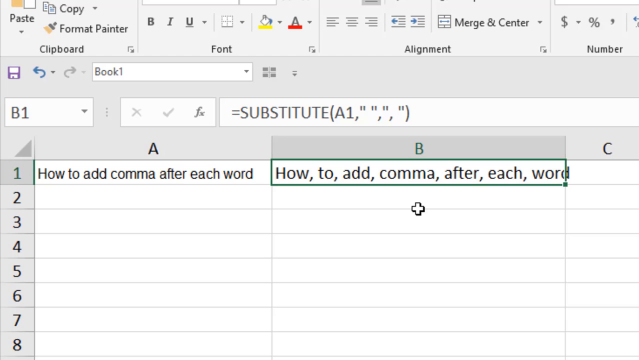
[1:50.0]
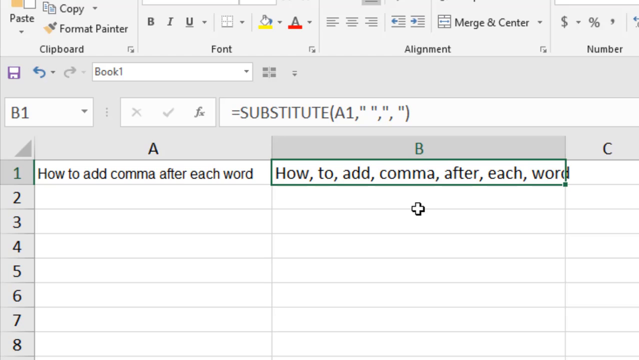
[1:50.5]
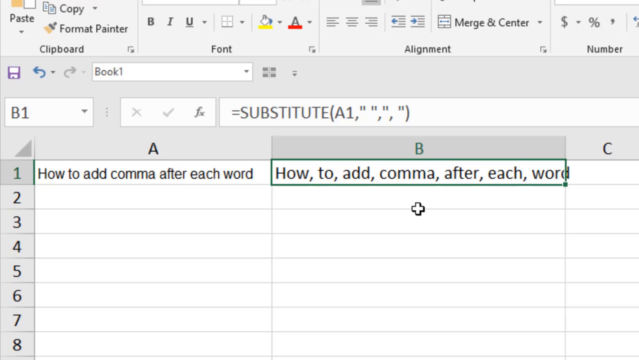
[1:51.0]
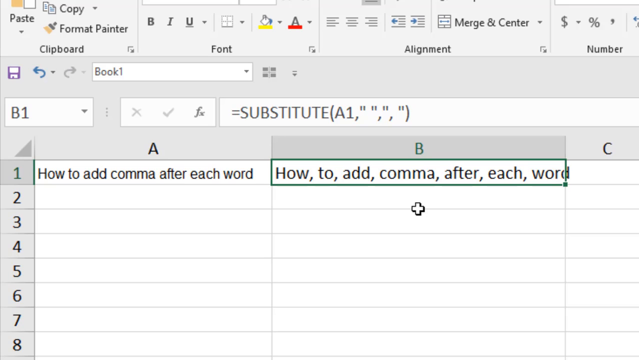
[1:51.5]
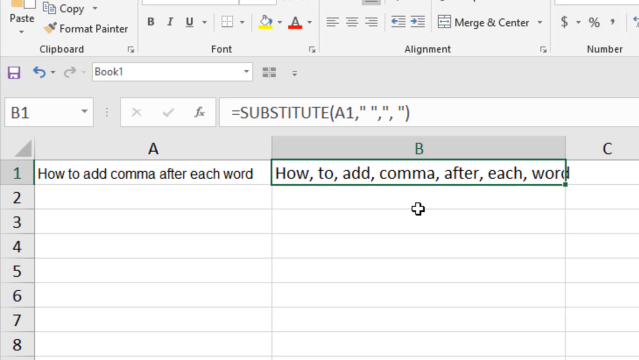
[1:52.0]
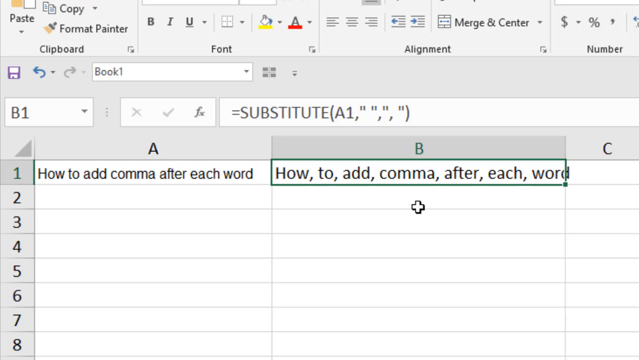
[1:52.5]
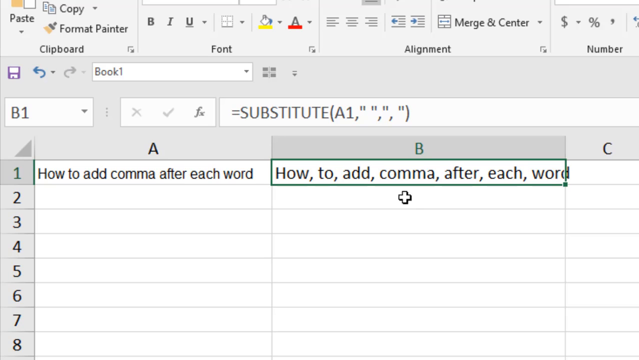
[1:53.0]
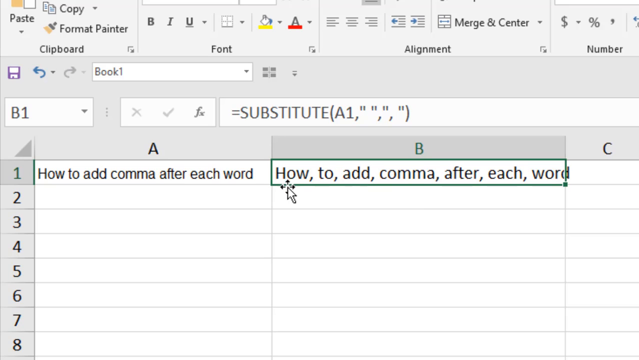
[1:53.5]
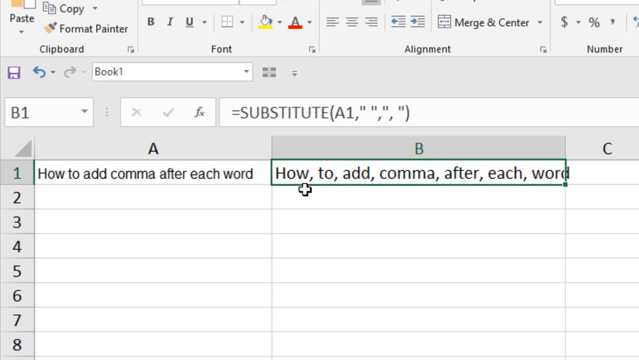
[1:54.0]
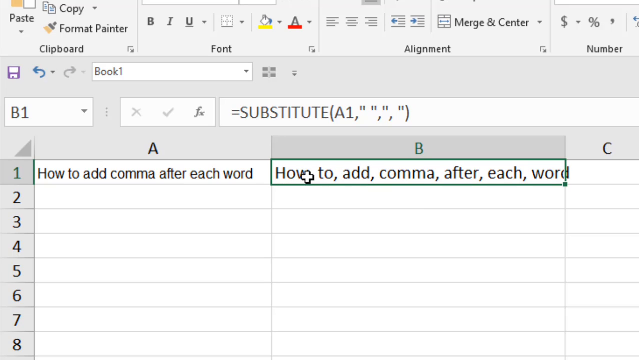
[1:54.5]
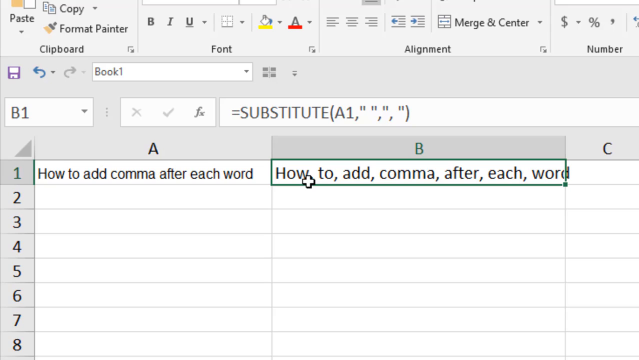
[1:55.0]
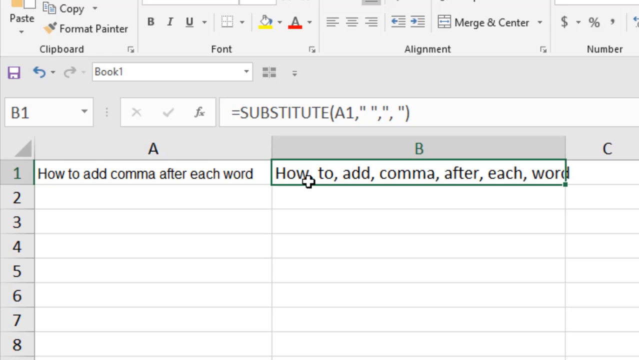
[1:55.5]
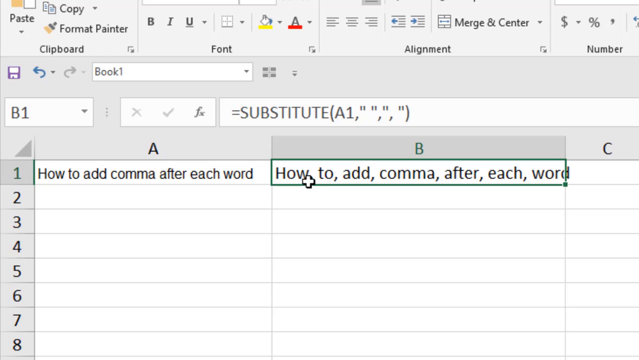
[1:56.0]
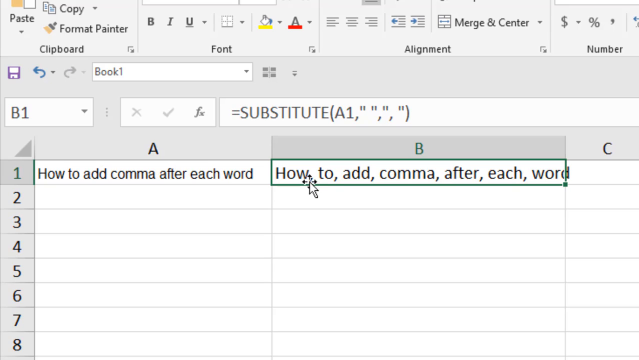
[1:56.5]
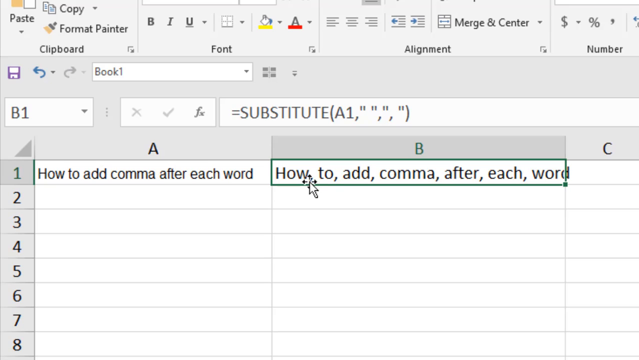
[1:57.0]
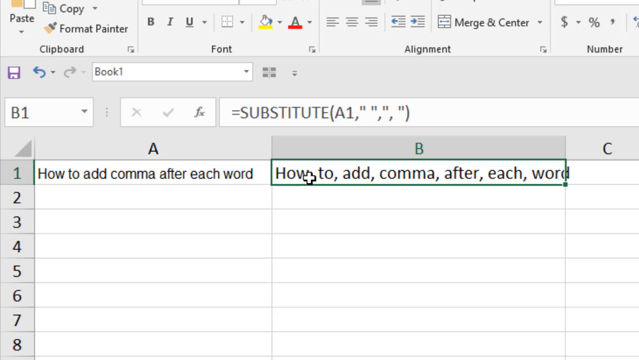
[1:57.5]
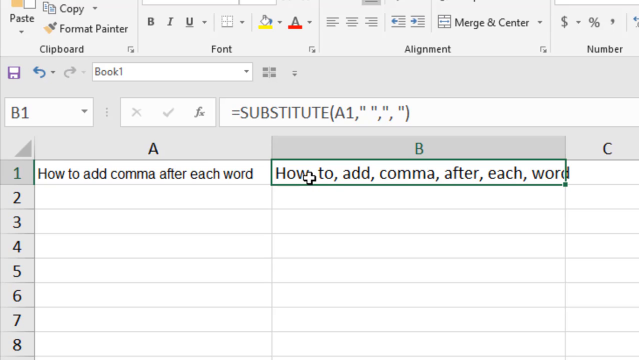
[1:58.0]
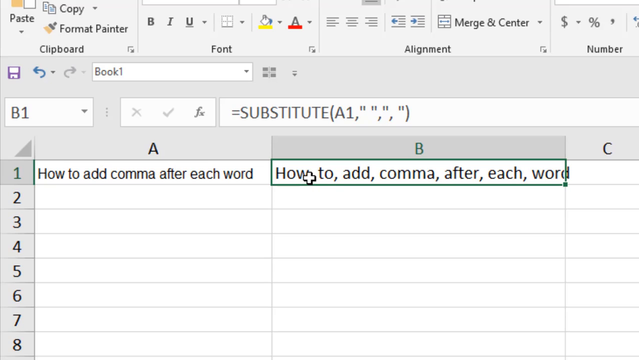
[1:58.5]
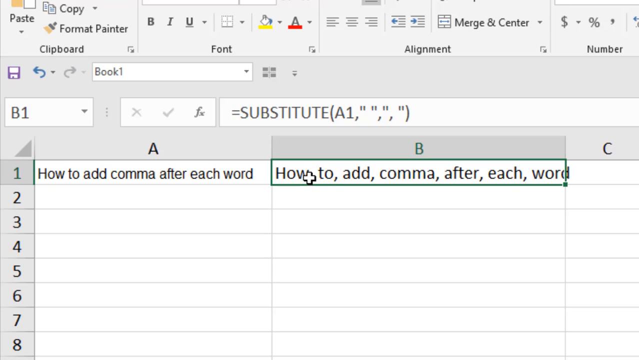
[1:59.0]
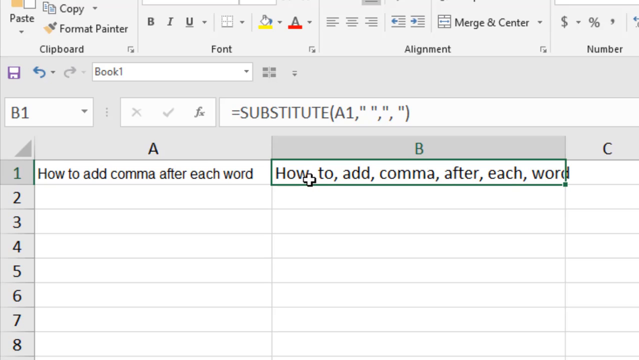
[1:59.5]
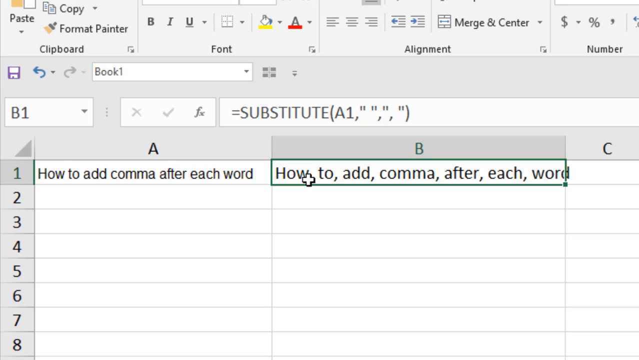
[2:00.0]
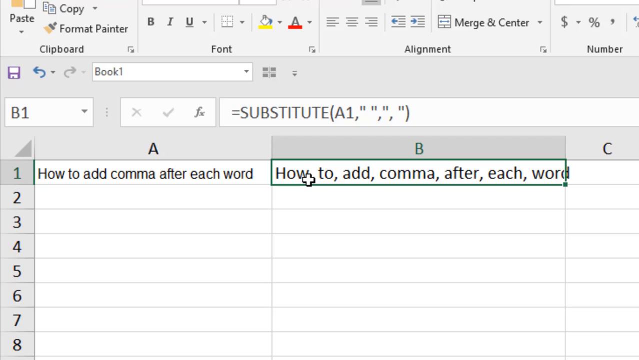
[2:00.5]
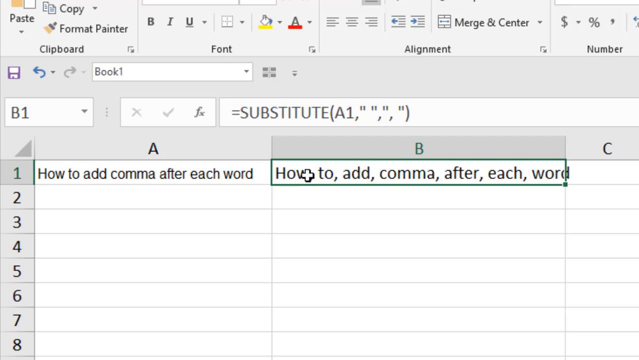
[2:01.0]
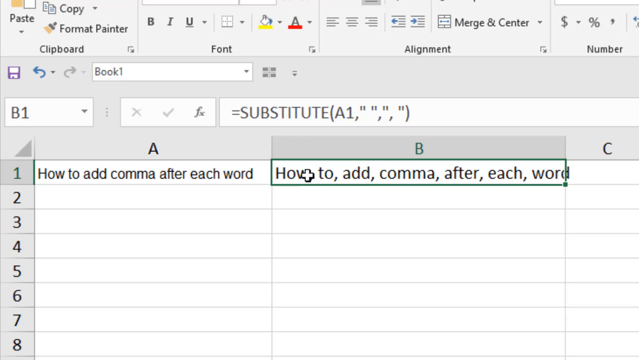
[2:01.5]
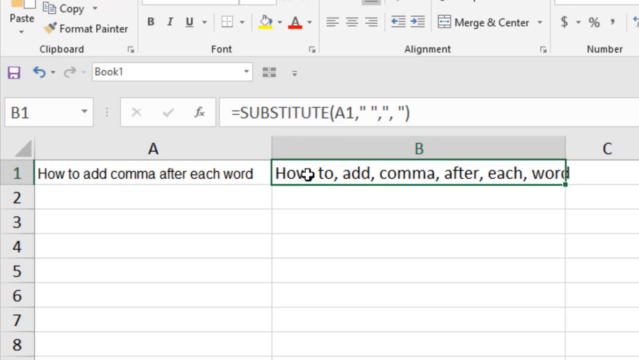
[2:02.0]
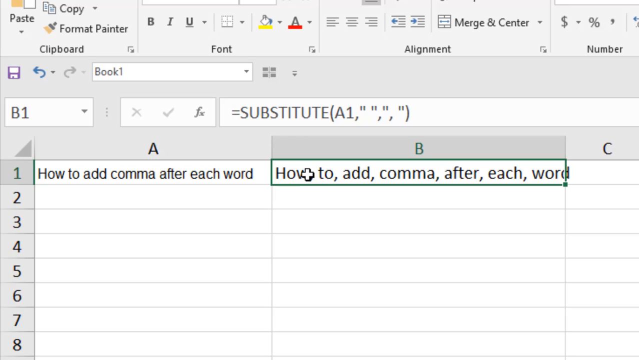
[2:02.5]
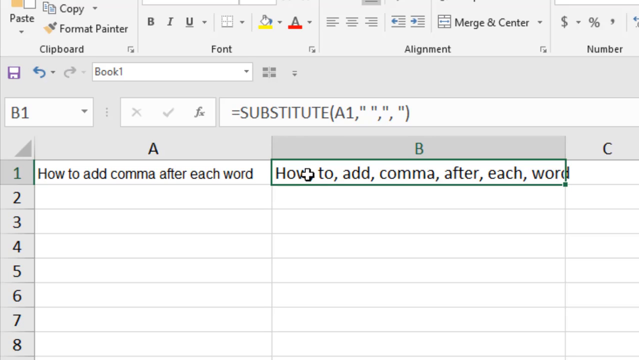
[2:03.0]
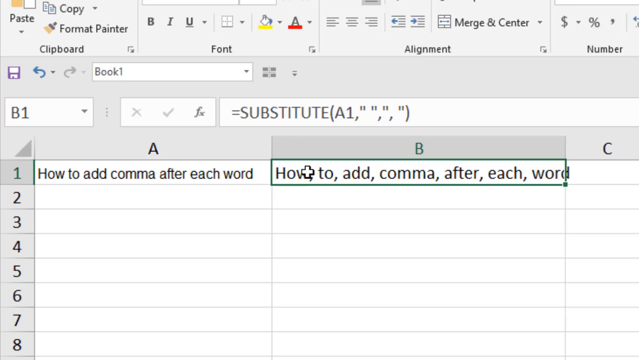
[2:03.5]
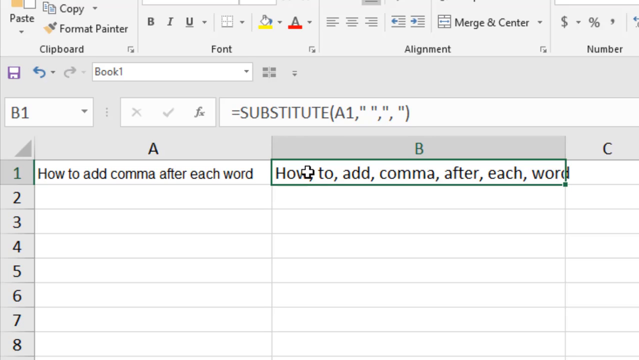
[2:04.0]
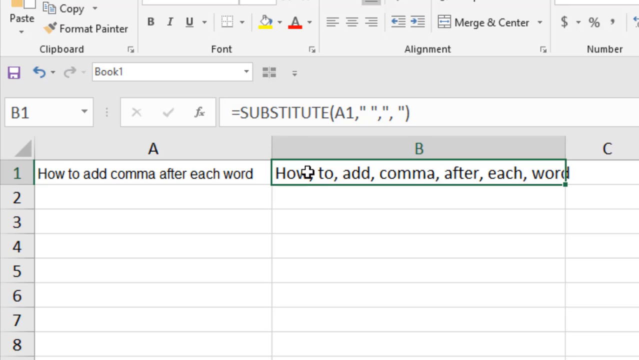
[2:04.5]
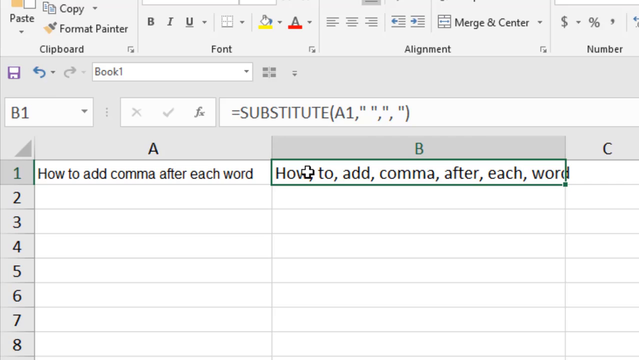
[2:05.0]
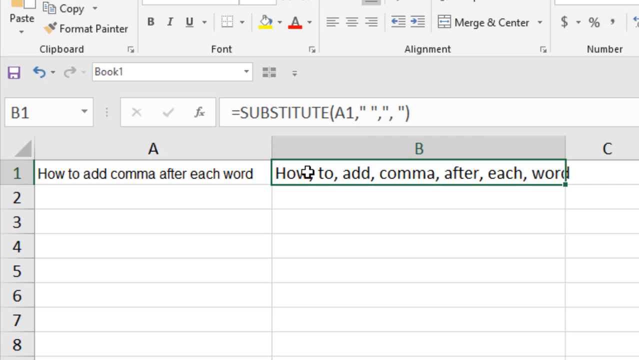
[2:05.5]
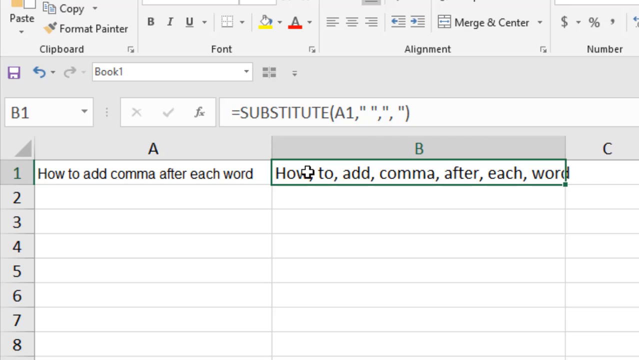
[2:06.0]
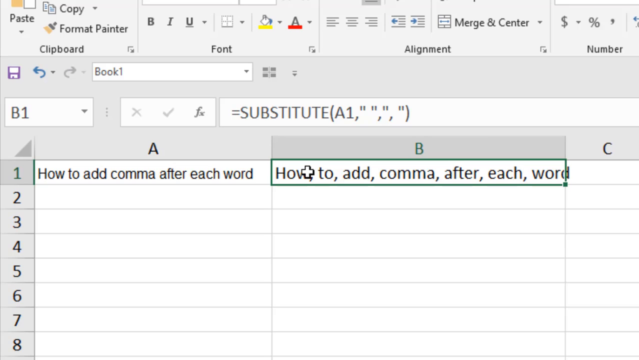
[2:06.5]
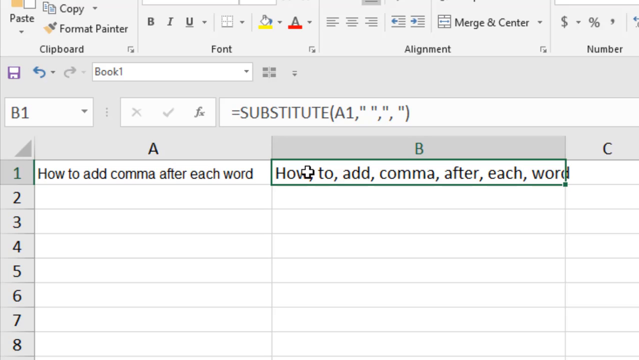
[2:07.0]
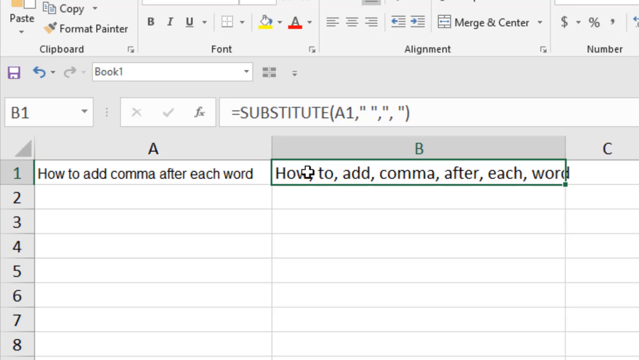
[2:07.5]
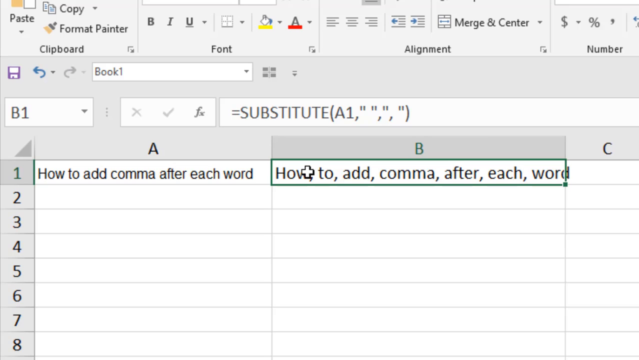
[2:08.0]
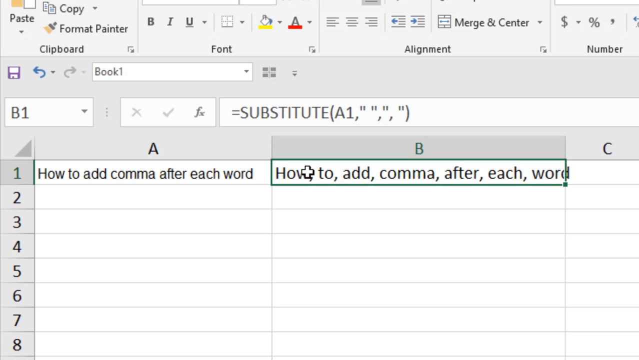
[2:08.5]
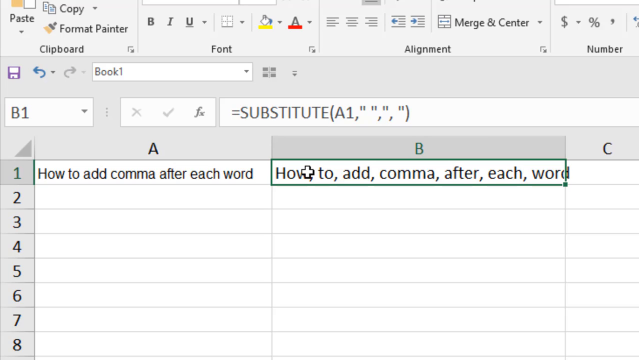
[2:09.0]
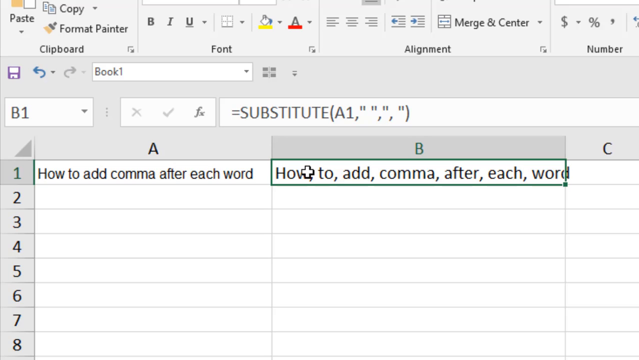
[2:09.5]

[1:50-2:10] In the Excel spreadsheet, row 1, column A reads "how to add comma after each word", and row 1, column B shows the sentence with a comma after each word. The author has entered a formula with A1 and quotation marks containing a comma and a space, applying the same change to the words in A1. The author highlights row one, column B, and has already changed the width so the information can be read and fits inside the cell.